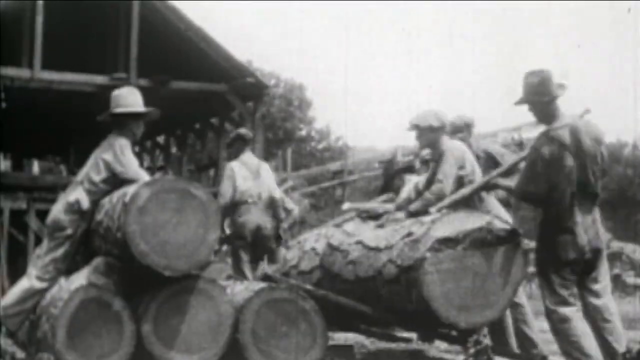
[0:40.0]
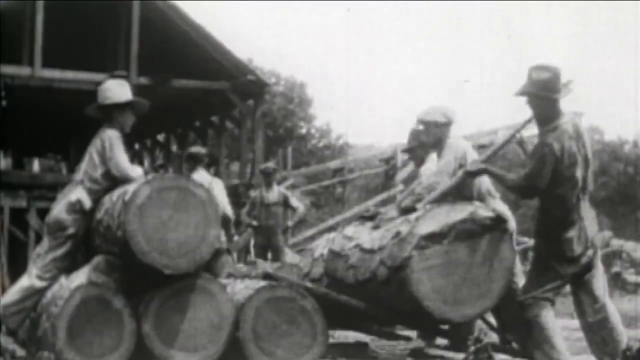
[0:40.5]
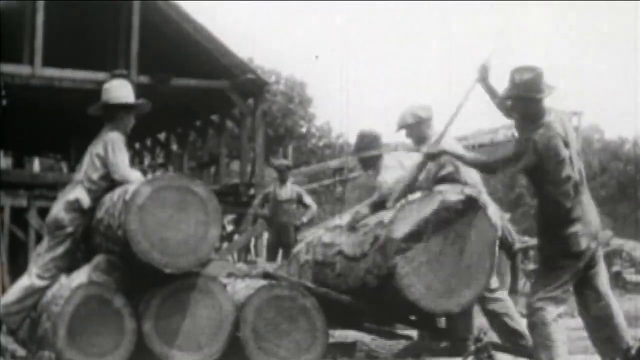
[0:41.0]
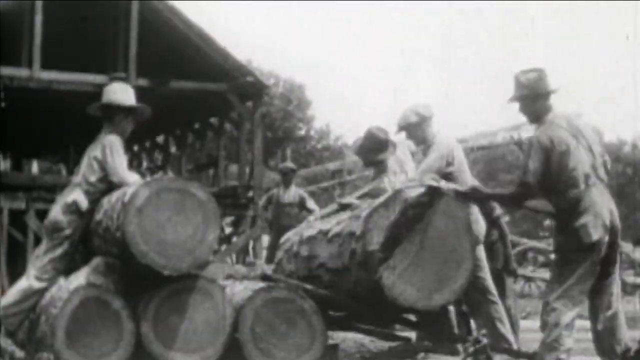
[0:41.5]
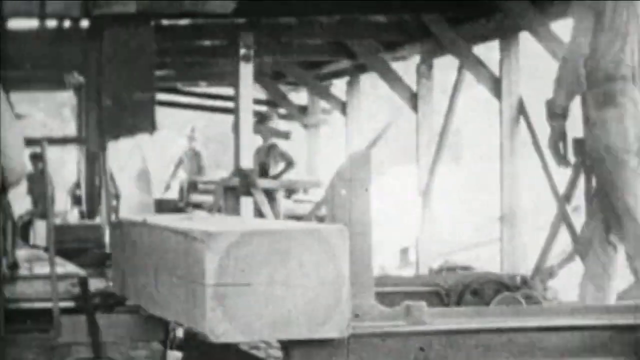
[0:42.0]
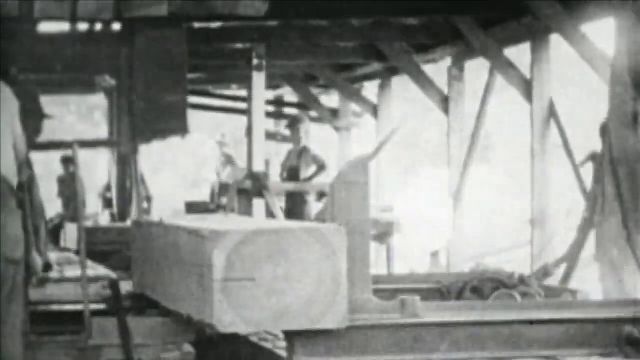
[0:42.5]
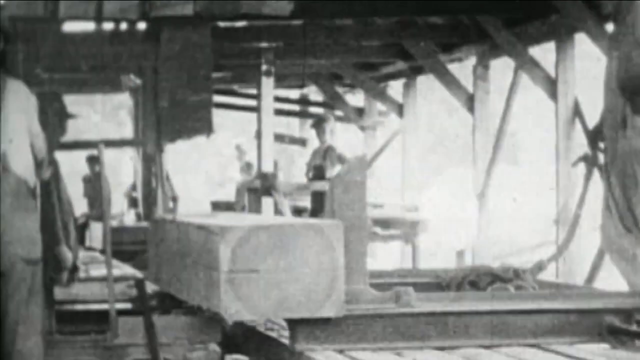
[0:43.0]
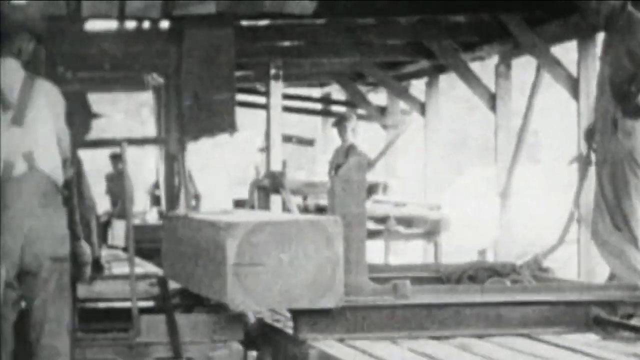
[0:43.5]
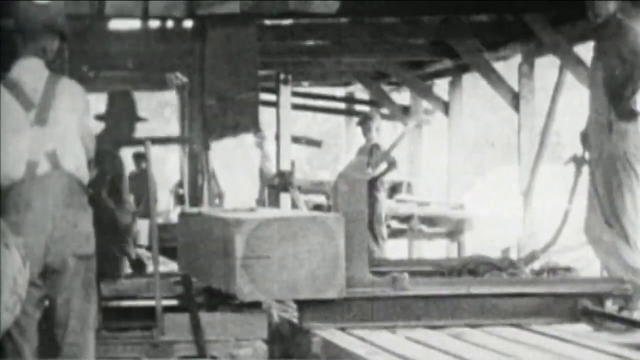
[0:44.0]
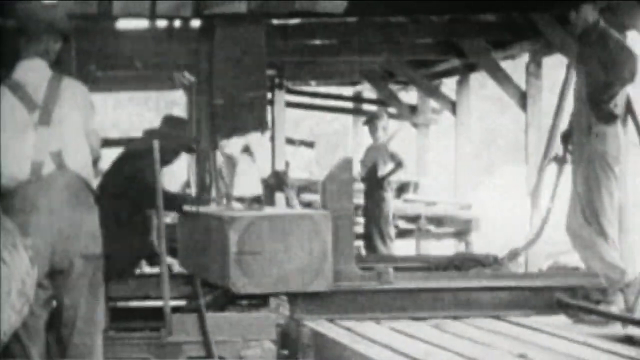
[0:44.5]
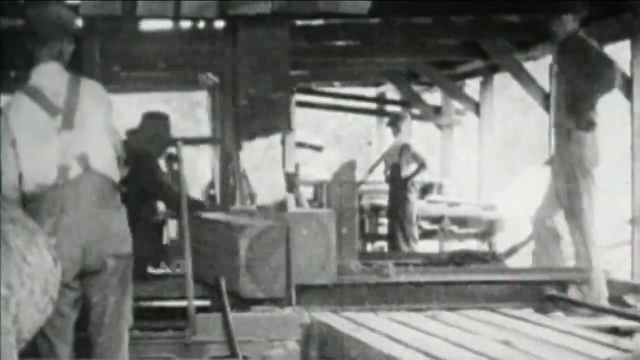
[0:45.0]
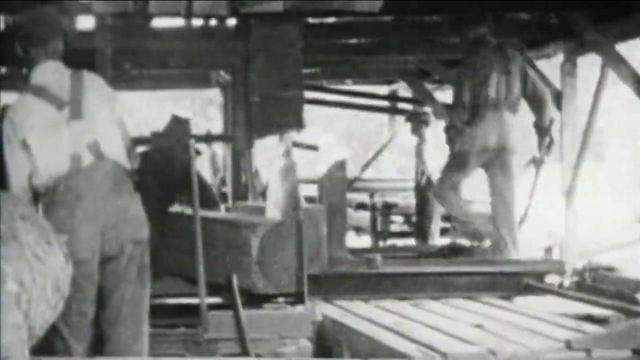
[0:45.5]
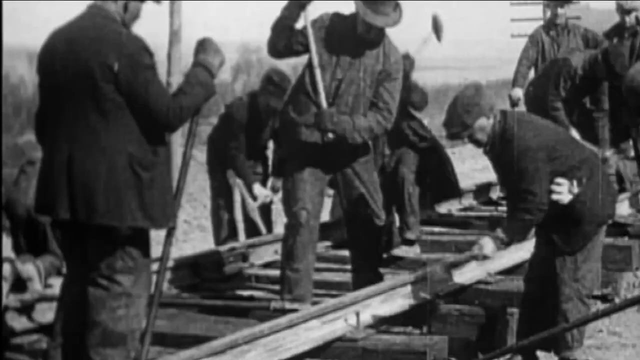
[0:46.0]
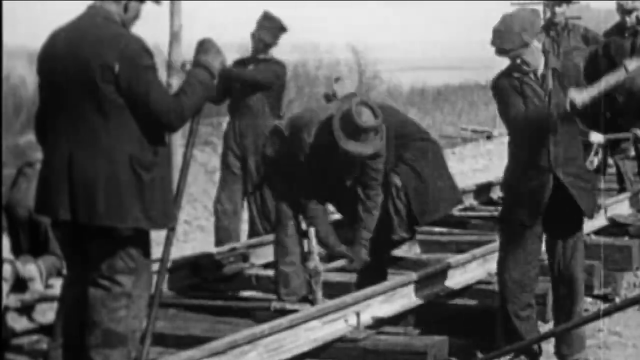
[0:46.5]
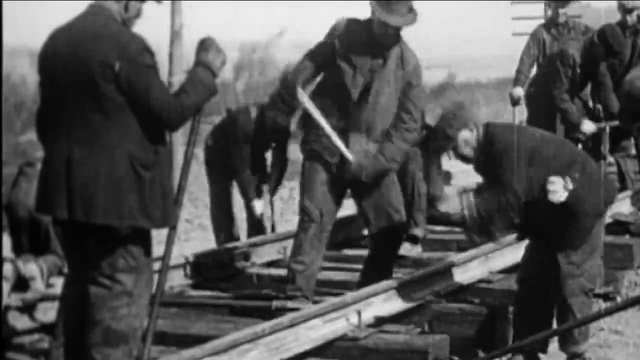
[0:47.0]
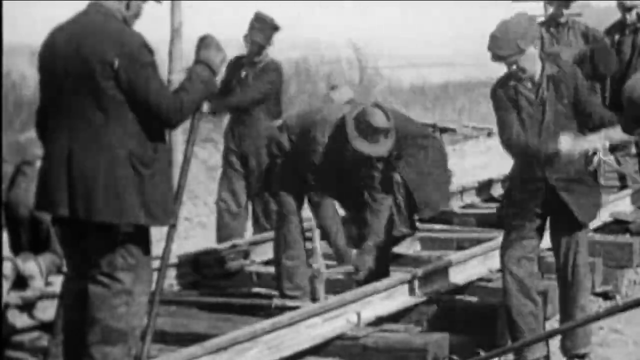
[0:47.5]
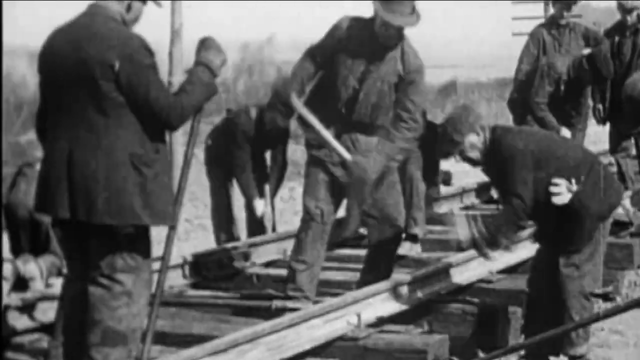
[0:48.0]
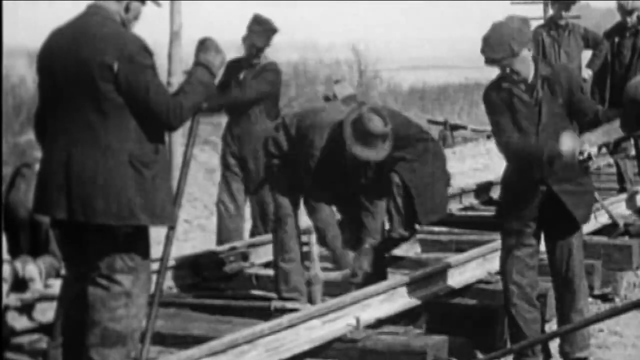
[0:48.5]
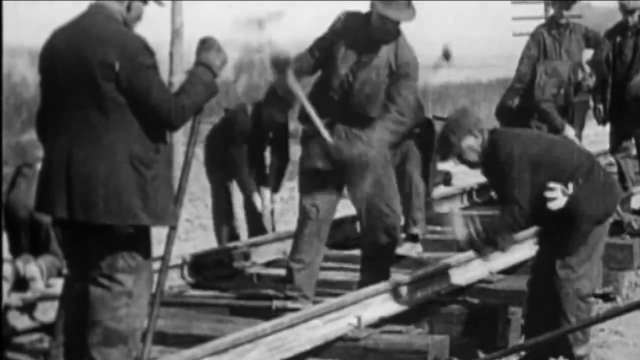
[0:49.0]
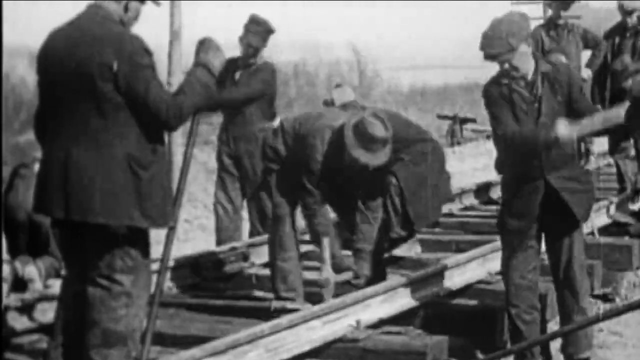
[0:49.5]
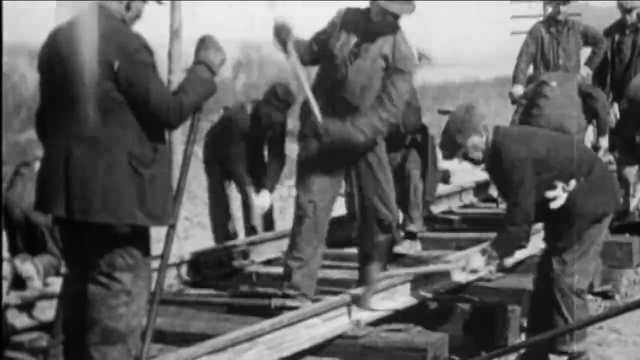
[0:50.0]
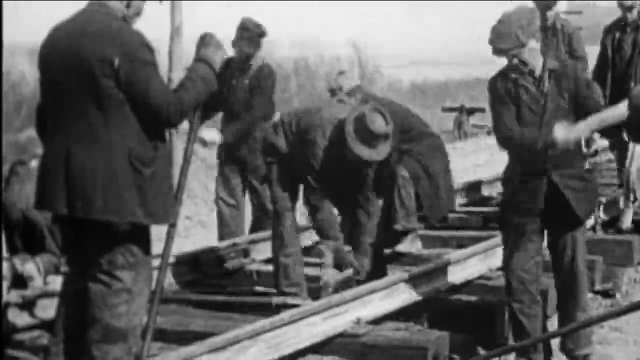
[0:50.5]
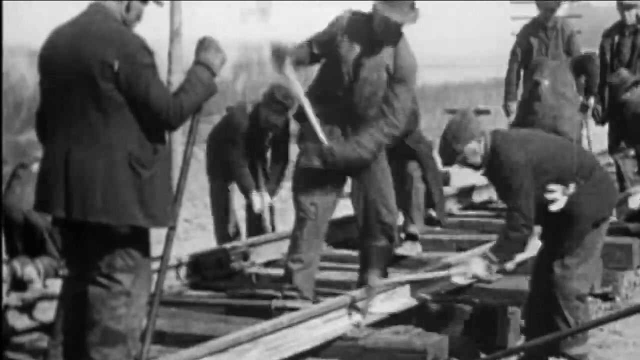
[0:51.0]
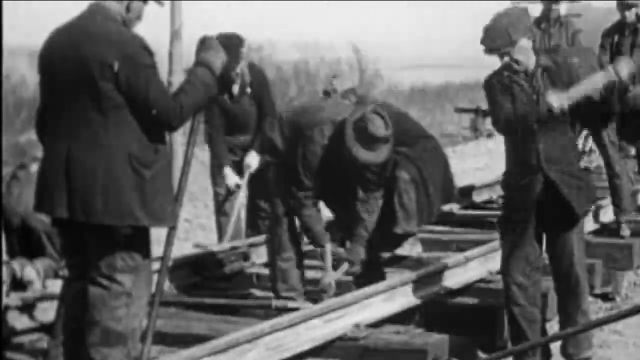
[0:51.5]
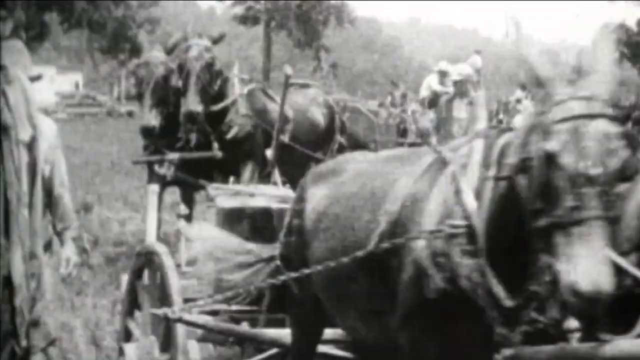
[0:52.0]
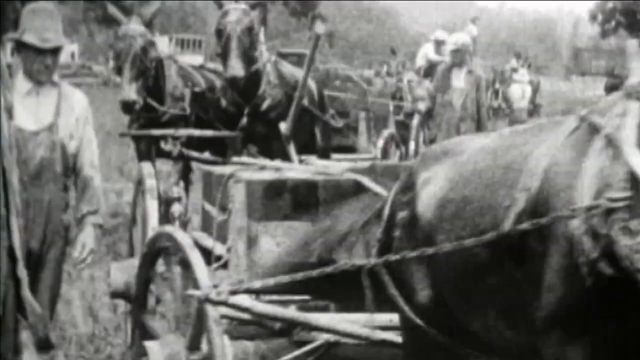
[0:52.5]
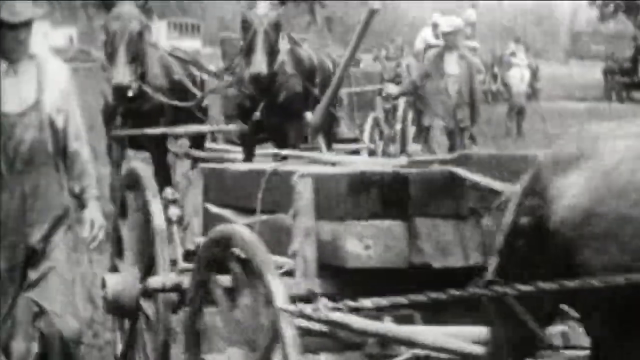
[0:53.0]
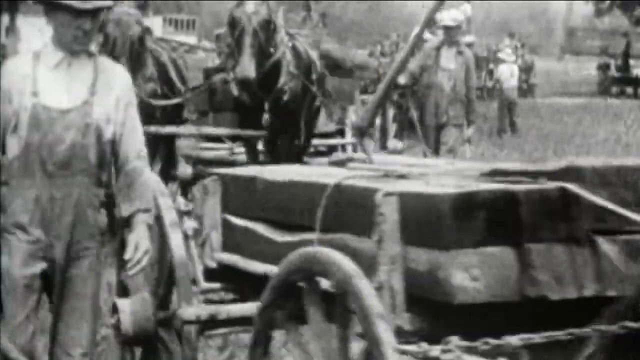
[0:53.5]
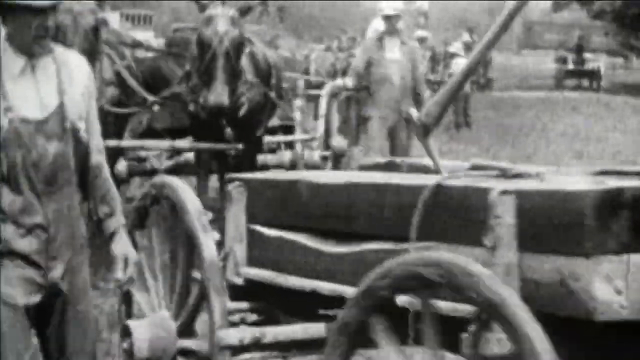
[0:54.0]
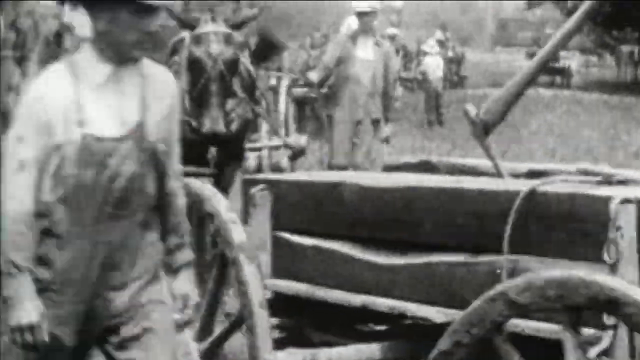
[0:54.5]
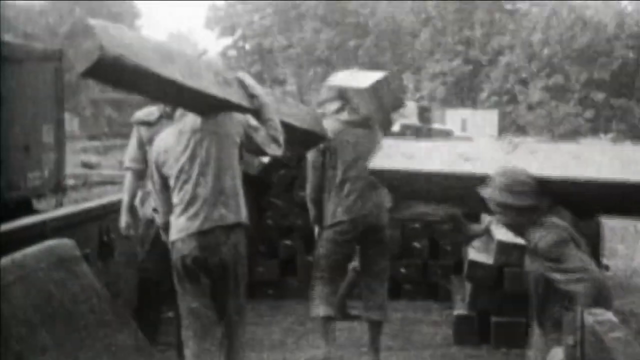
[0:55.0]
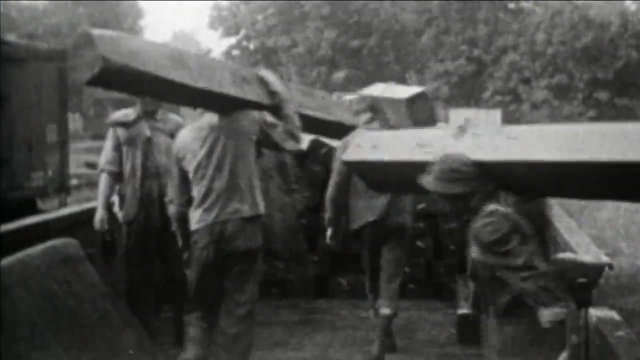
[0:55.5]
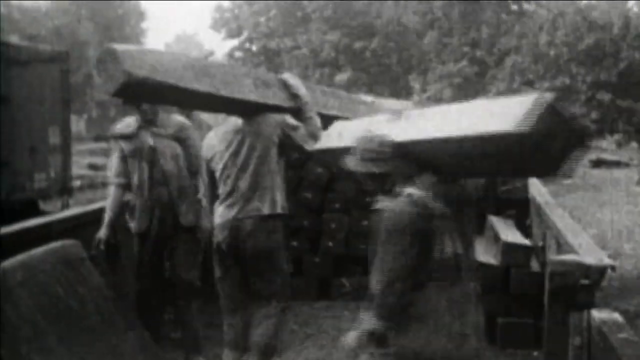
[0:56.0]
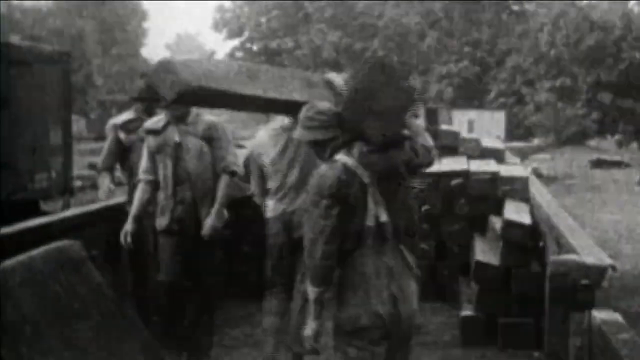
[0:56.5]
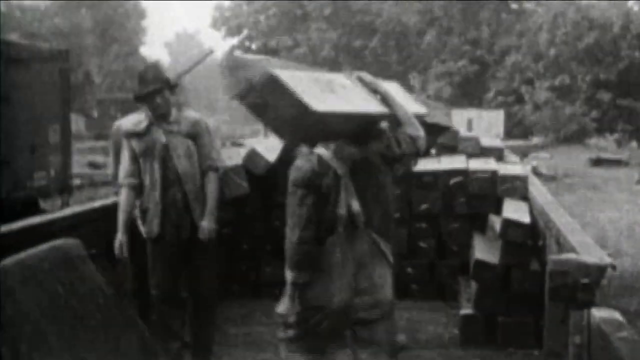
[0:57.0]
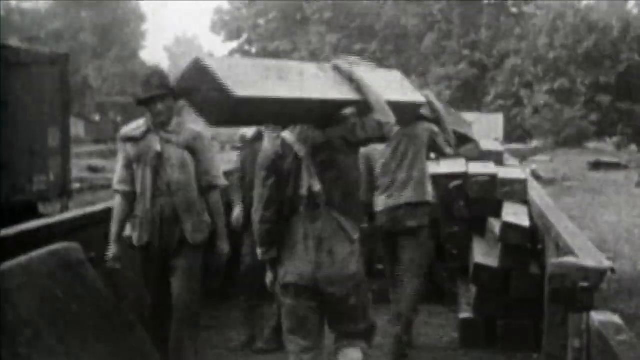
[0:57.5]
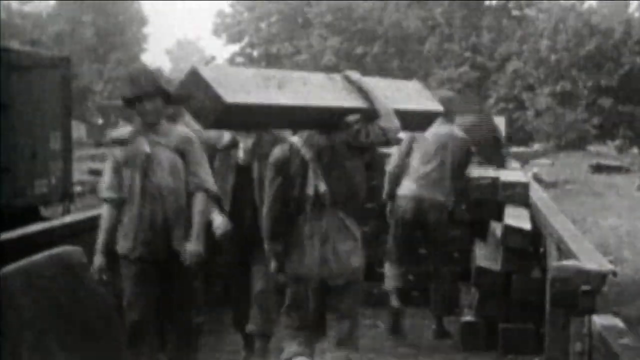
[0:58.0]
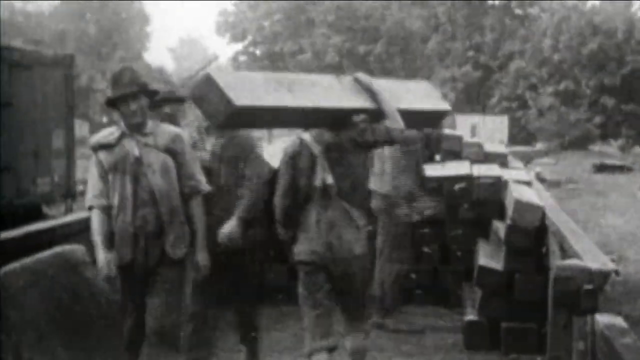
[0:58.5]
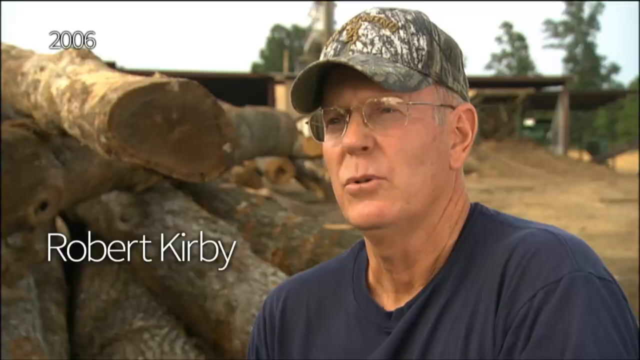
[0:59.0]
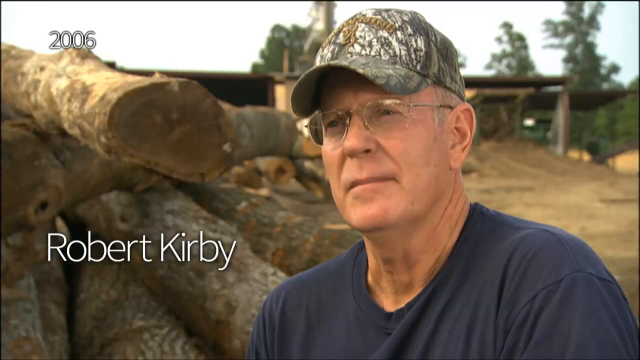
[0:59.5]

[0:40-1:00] In black-and-white footage, people continue hauling logs and pulling them together. The scene moves to some type of small factory, where they appear to be sawing logs. Then people on a railroad hammer down the railroad. More horses carry more logs and steel, and everything is put together. Finally, an older man named Robbie Kirby is shown talking.